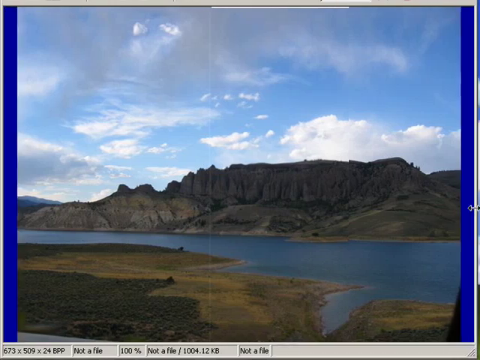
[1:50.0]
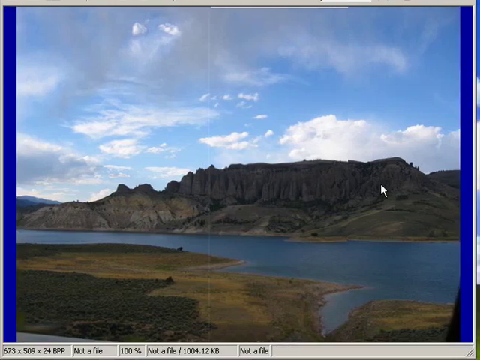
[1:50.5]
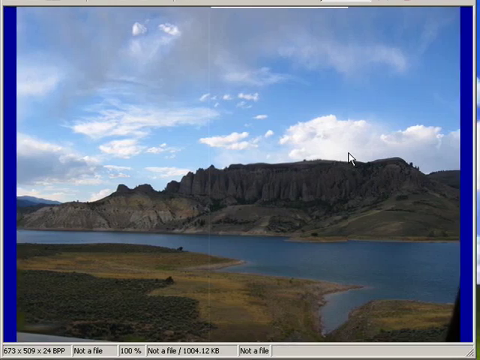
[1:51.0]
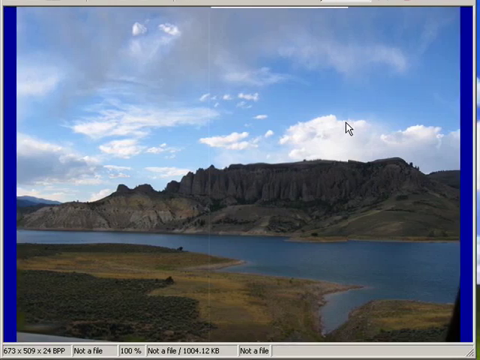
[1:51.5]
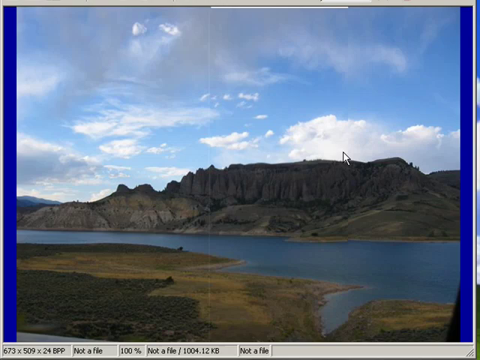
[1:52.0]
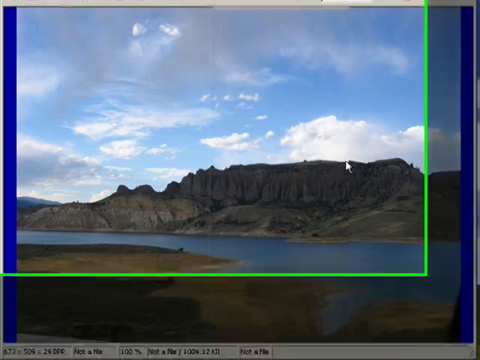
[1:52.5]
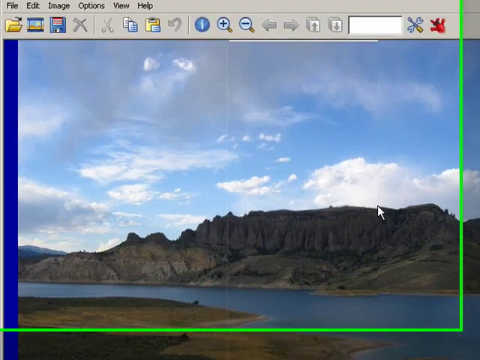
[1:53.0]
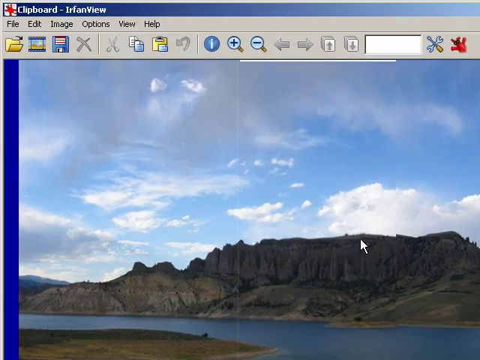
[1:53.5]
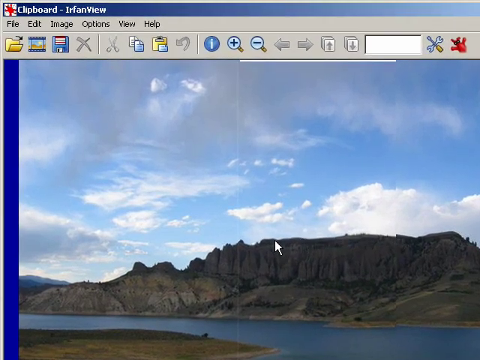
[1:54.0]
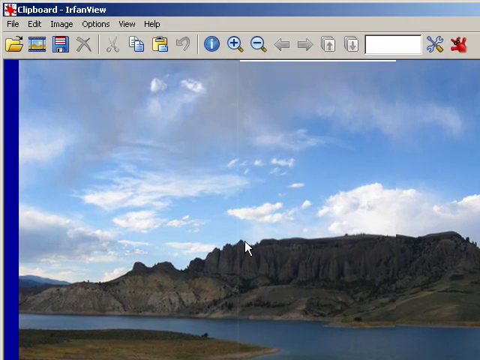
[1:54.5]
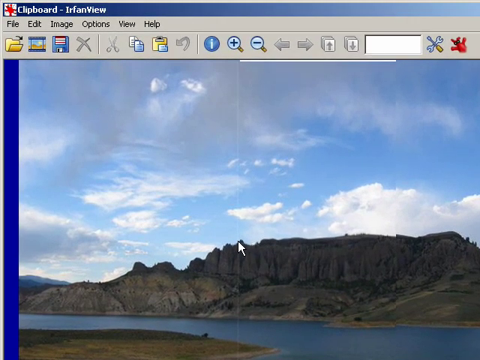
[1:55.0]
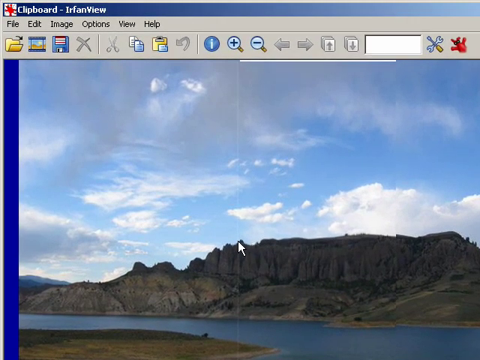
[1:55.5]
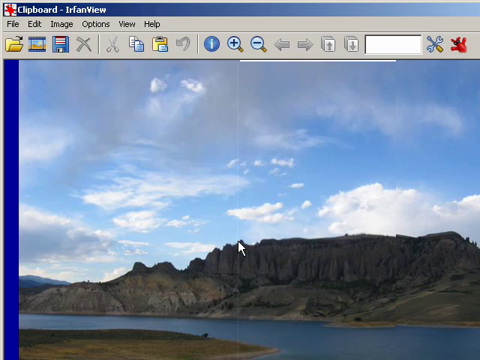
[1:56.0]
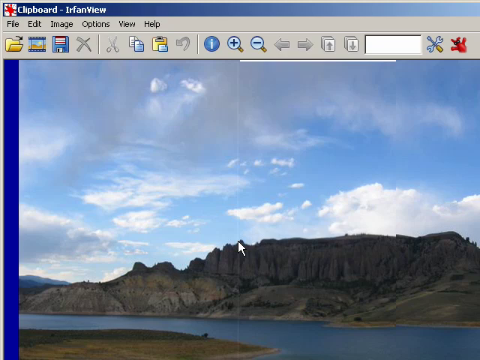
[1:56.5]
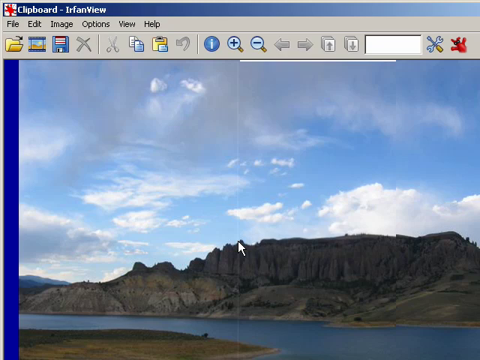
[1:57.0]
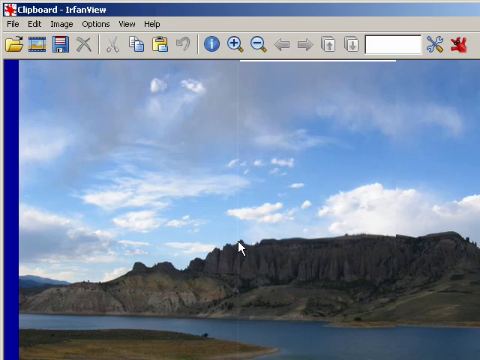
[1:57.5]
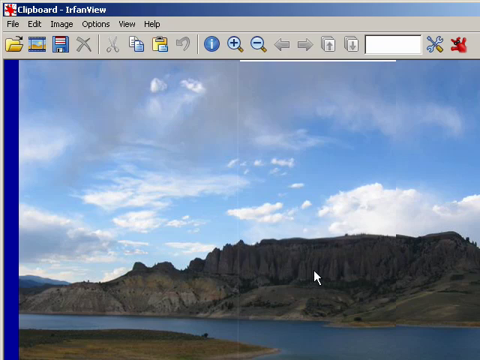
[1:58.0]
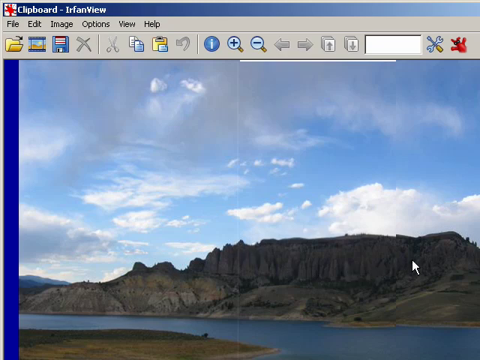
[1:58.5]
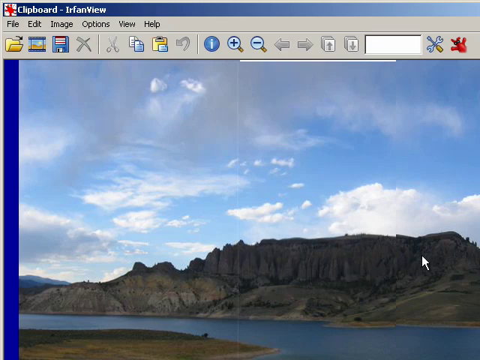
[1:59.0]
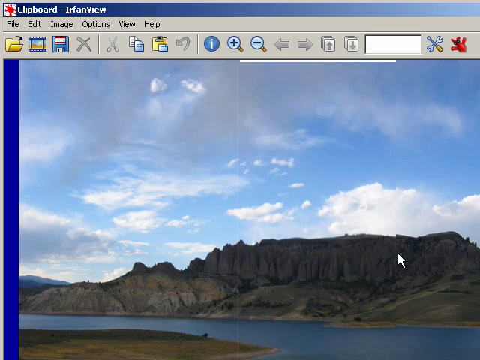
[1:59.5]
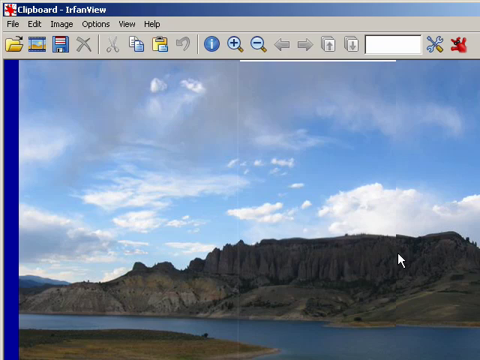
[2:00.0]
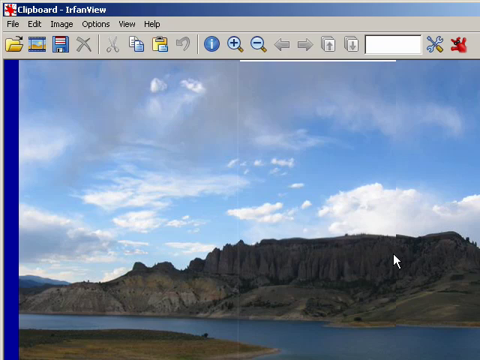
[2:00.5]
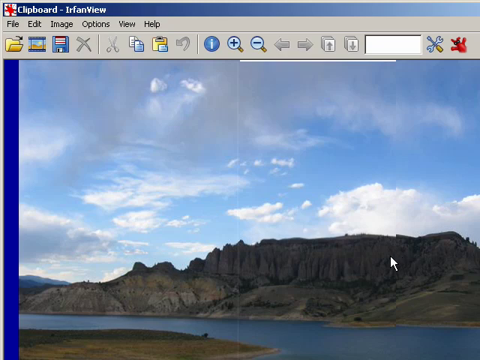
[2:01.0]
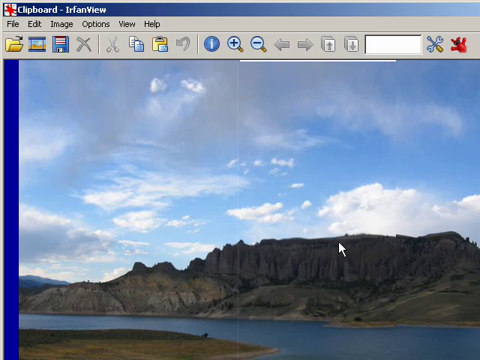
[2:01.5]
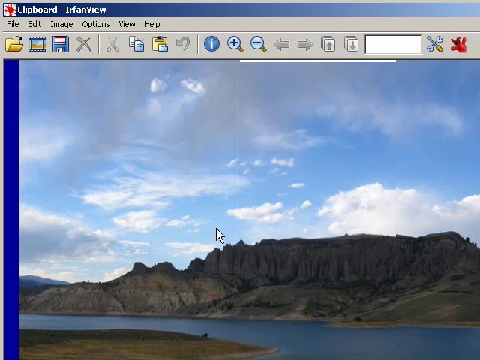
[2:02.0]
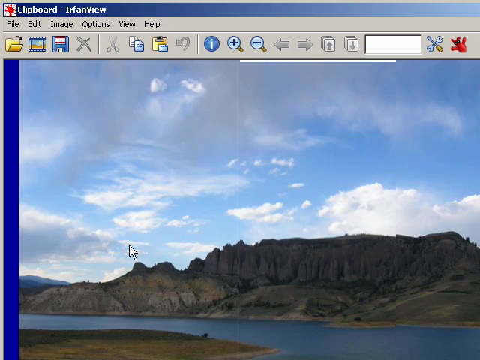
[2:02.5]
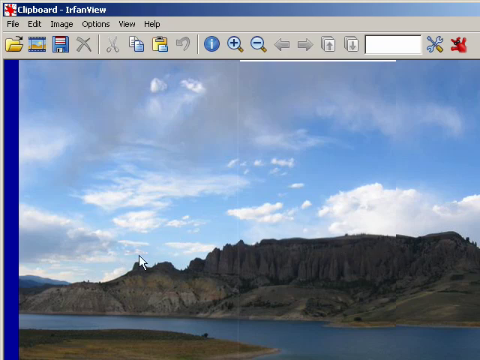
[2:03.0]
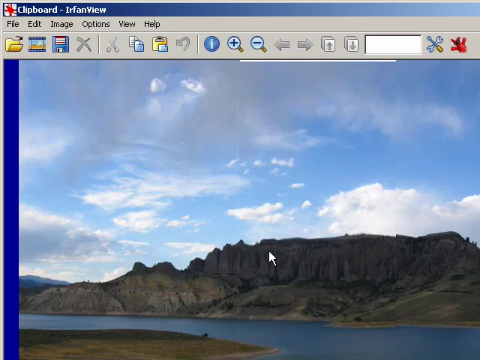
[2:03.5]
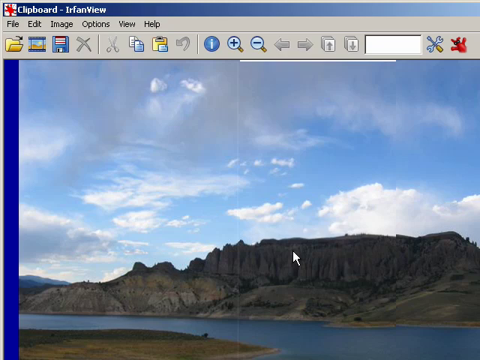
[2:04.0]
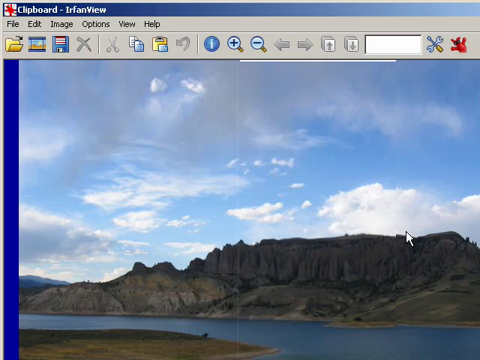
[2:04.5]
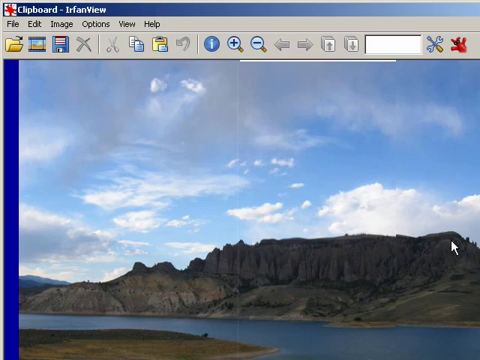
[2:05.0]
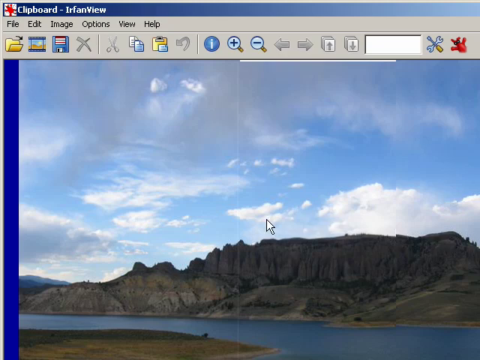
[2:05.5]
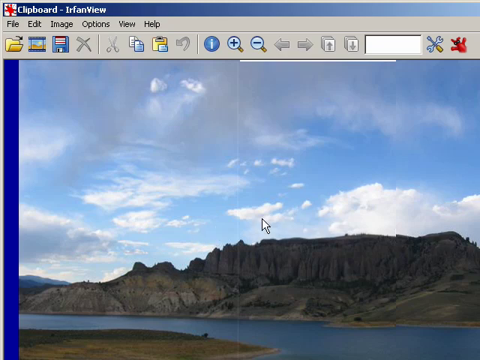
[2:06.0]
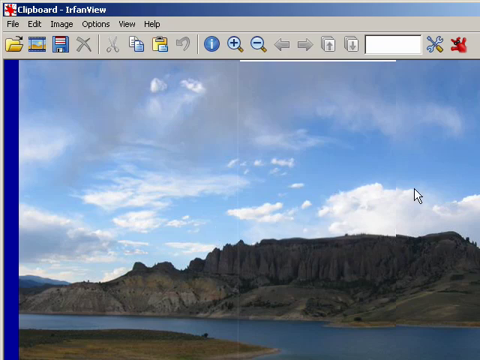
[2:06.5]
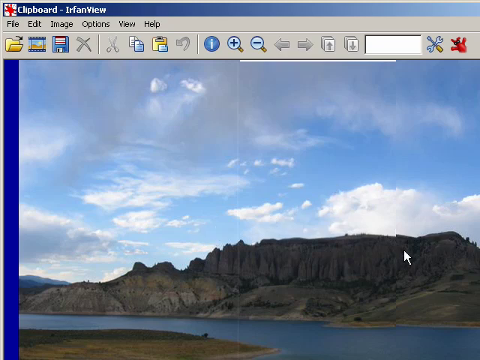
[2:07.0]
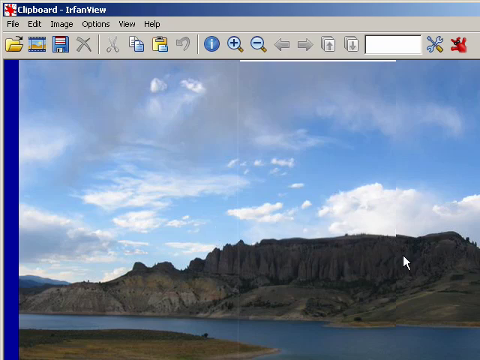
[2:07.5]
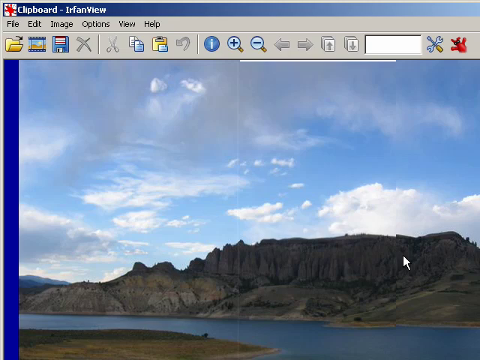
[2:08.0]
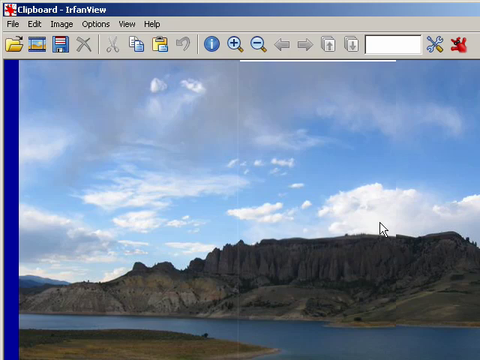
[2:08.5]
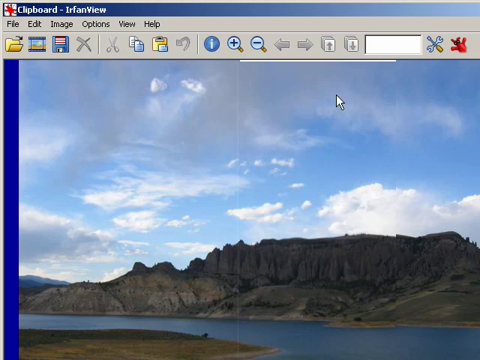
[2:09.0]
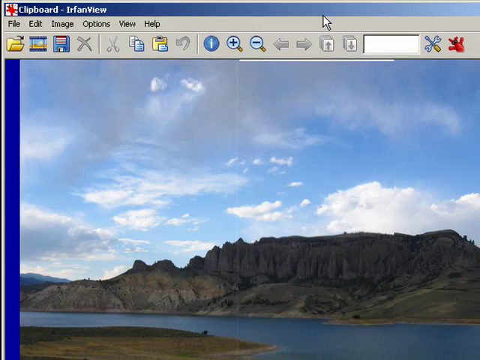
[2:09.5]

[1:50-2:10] On the left and right sides of the picture there is a vertical blue bar, and also a very skinny light white bar on the left side of the blue border. There is a sizer with left and right black arrows, which he moves away. With his cursor over the nature scene again, he zooms in, and the right and bottom borders are green again. The file, edit and image menu is visible, and the disc icon is now blue while the X and scissors are gray. The seams are visible, and he points with his arrow at the seams joining the sections, showing where they are slightly distorted and do not match exactly, such as where the second and third images meet; the third image looks a little too high. Moving the arrow back and forth rapidly makes it look like there is more than one arrow. He clicks the top taskbar and zooms out again. In the image, across the top from the left are what look almost like rain clouds, a smoky gray, along with some wispy white clouds, and what looks like one puffy cloud coming over the long bluff. Toward the left, the bluff drops off in a couple of rolling flat-topped parts. In the foreground, the water looks like it flows into a sandy area with some grass.